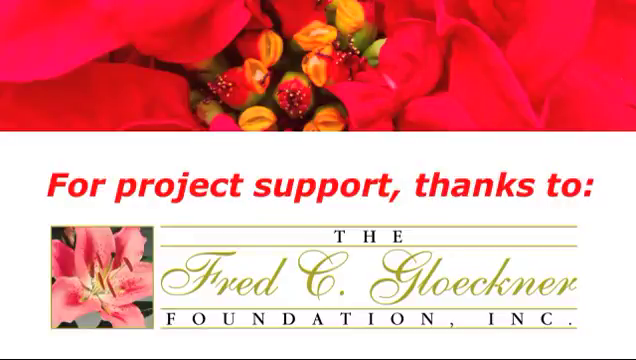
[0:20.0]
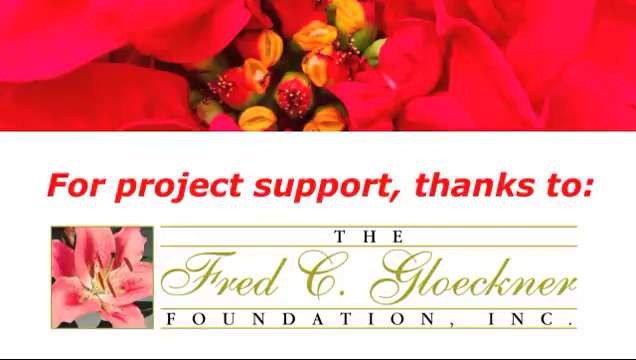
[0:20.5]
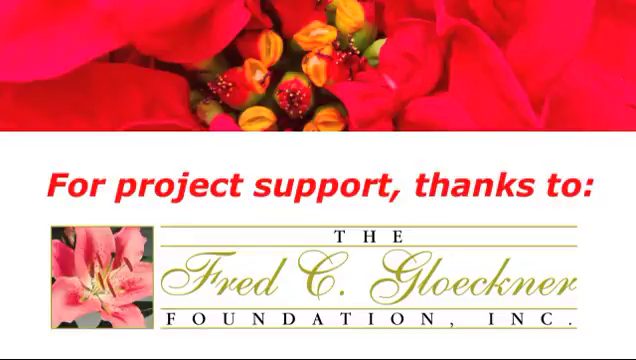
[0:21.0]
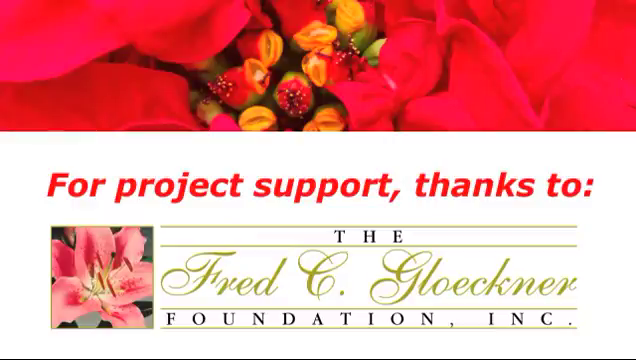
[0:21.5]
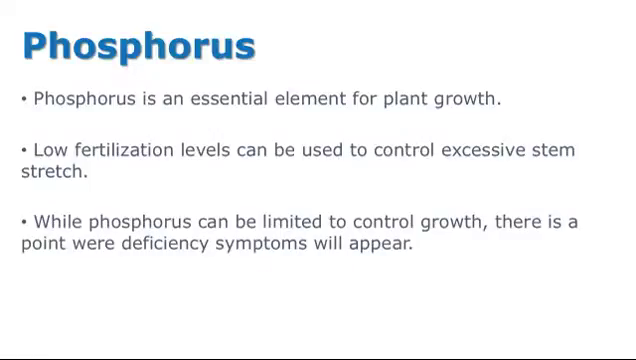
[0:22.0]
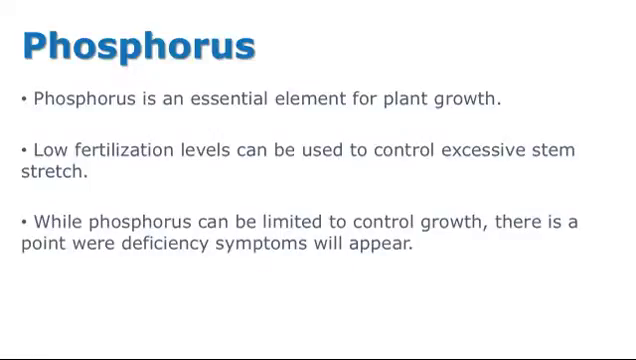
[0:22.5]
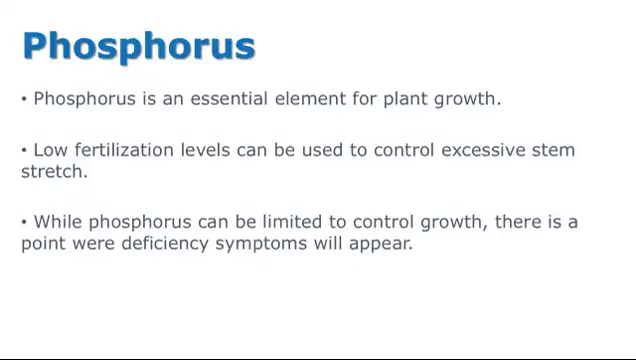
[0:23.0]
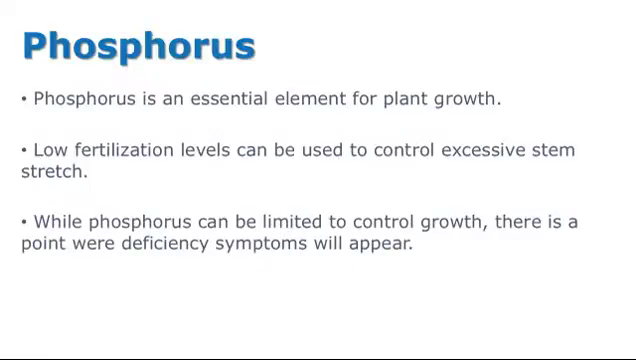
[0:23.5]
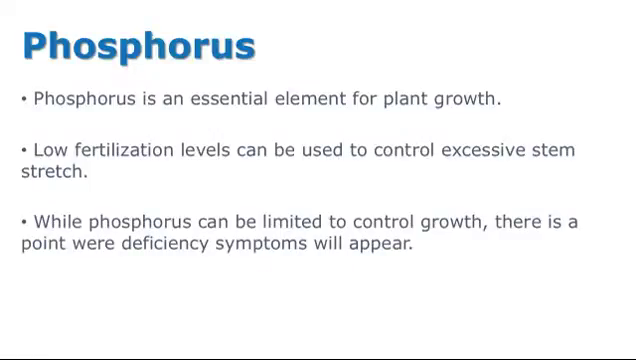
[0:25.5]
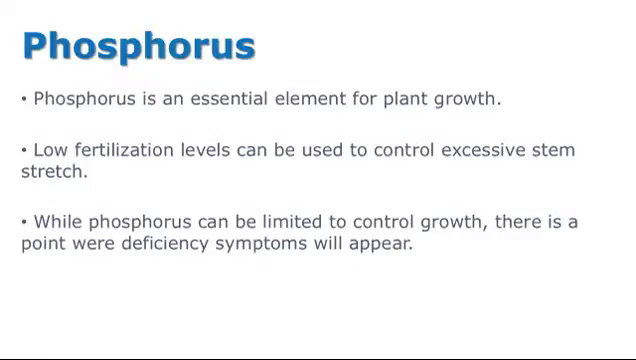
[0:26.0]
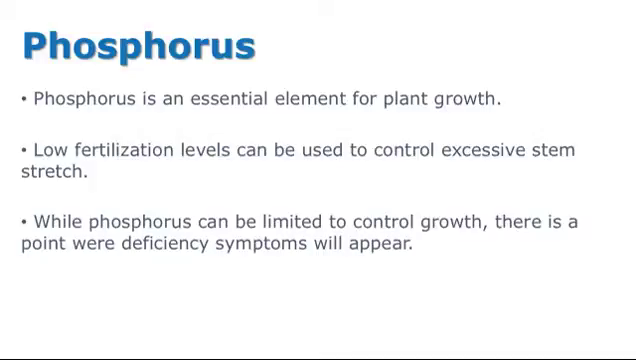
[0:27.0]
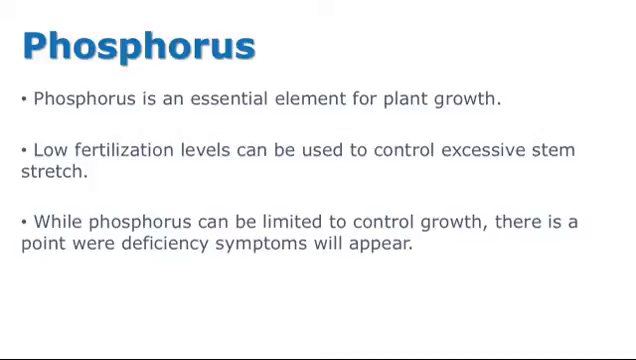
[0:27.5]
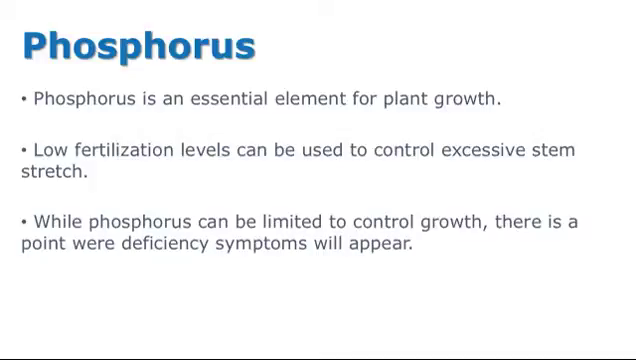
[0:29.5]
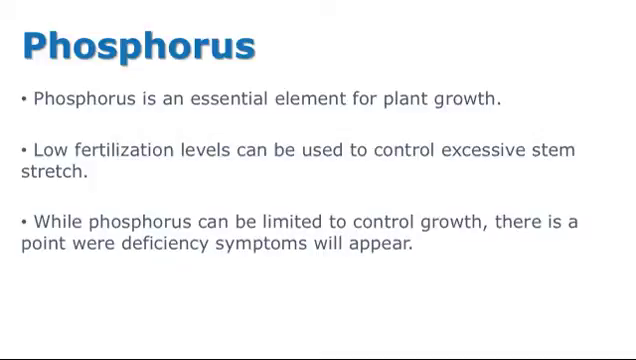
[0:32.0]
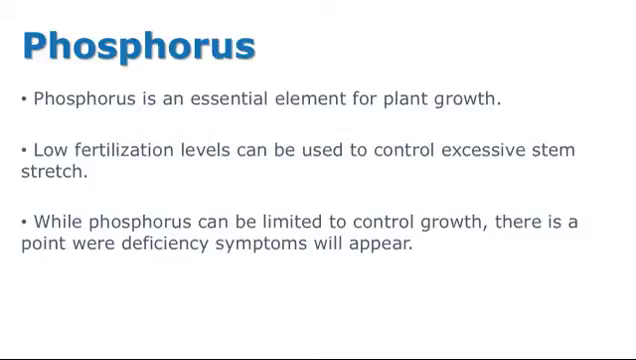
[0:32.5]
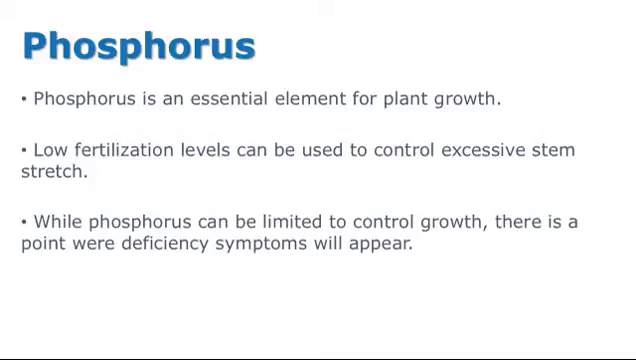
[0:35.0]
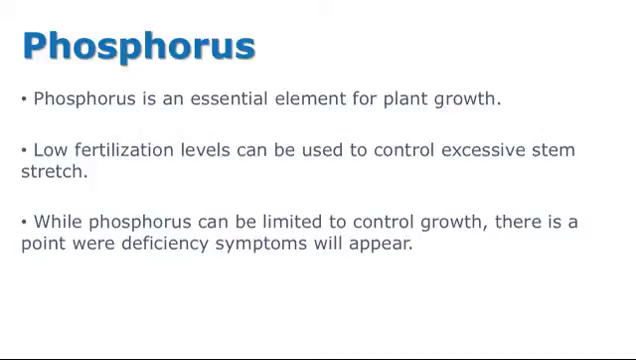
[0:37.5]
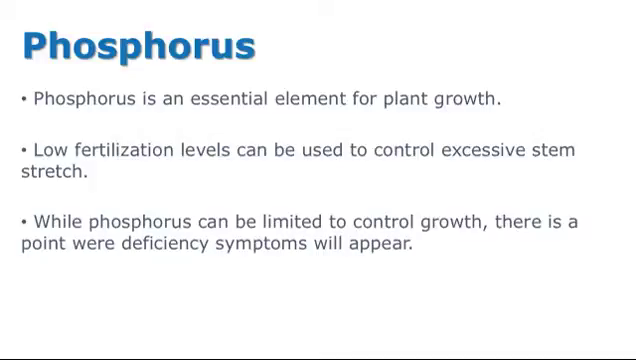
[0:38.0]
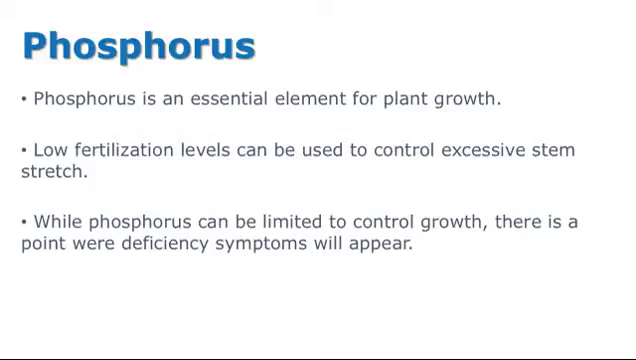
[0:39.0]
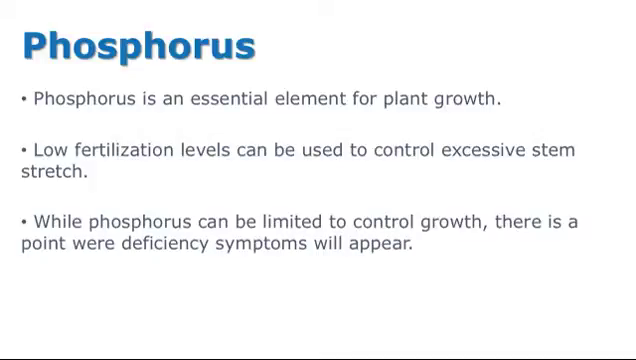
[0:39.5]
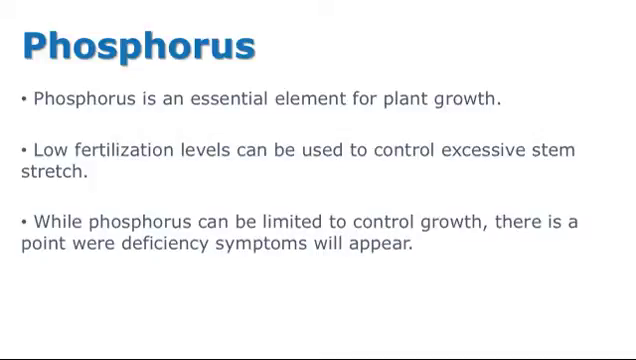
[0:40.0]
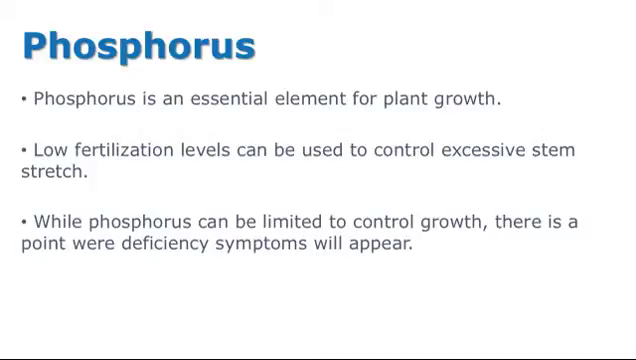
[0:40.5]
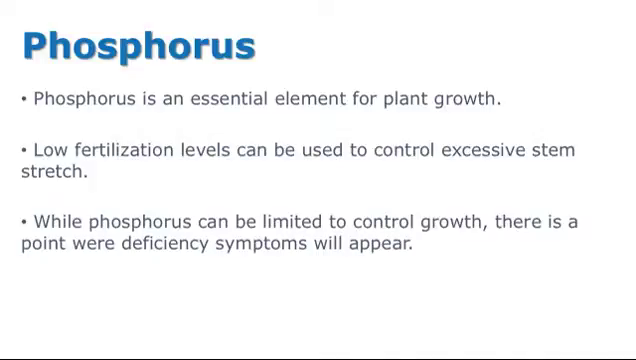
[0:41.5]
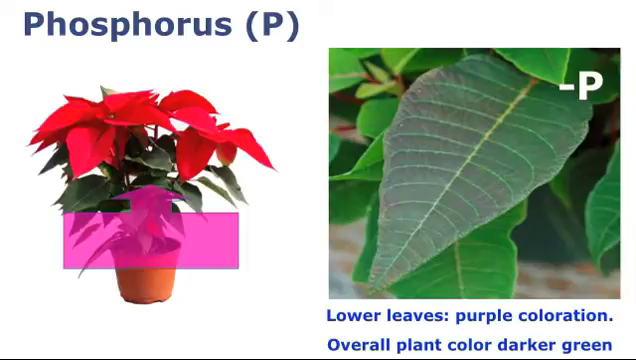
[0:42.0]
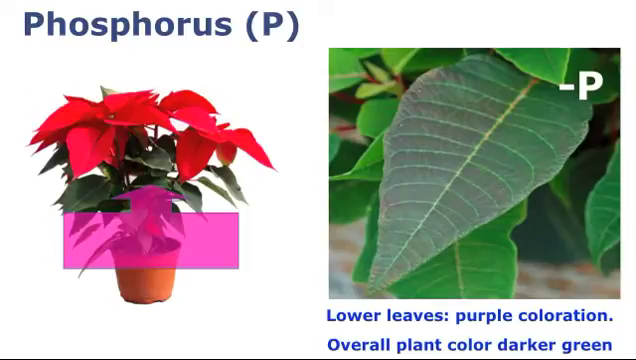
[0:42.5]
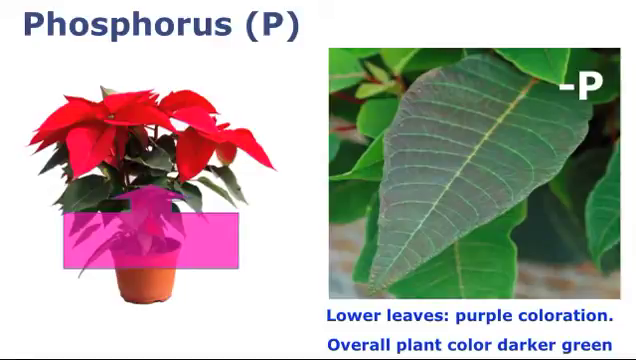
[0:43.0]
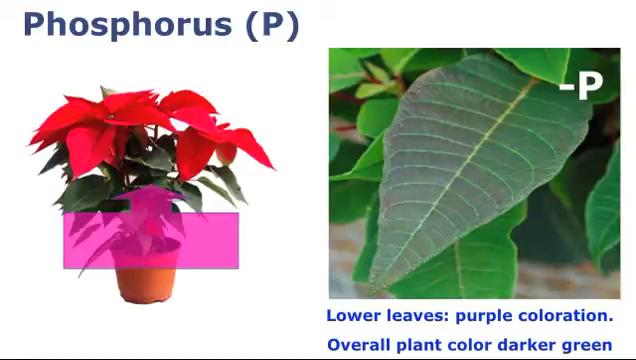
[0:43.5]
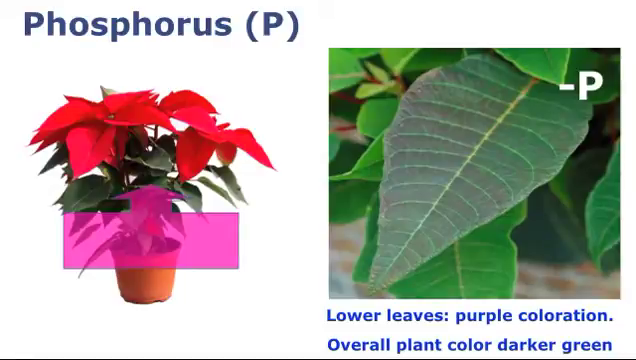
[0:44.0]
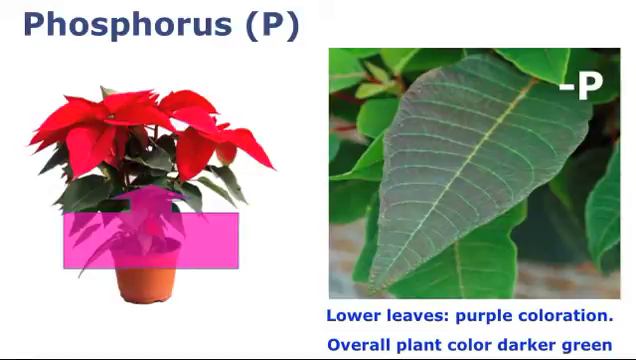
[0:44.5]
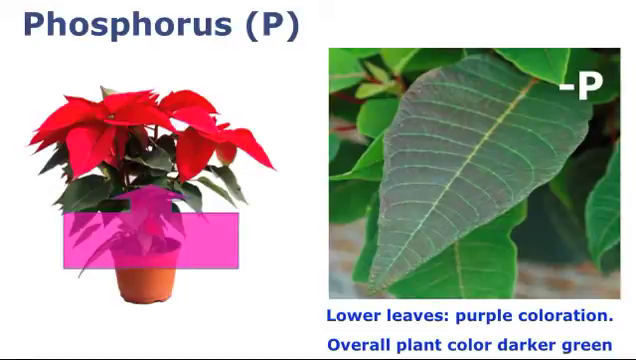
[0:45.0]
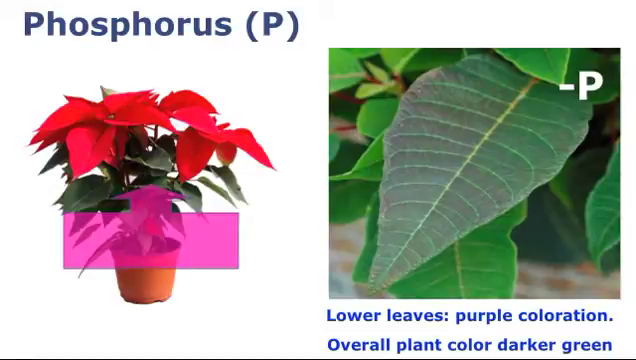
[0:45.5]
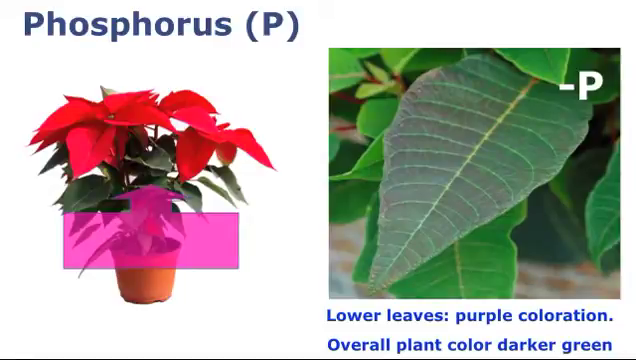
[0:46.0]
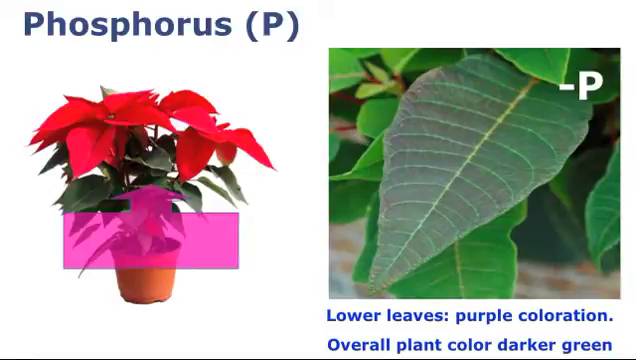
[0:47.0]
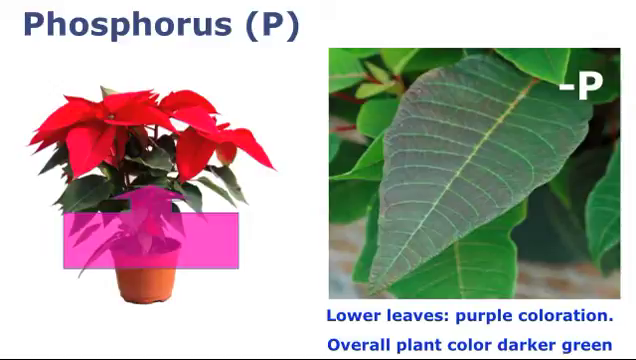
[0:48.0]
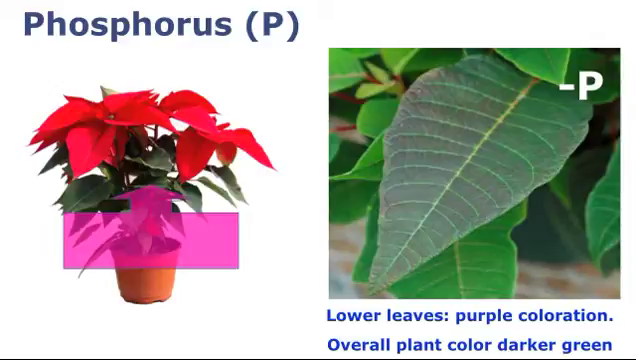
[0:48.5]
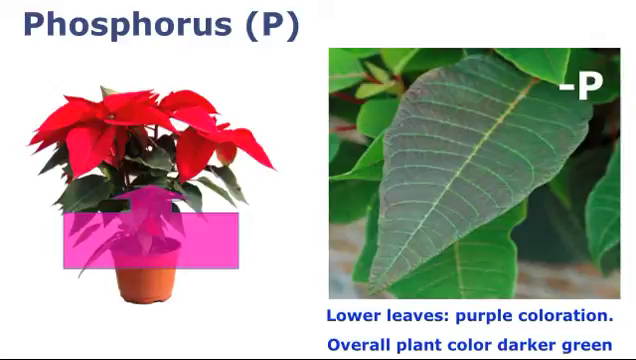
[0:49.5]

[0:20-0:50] An illustration of a poinsettia takes up about a third of the screen at the top. In the center, on a white background, red lettering reads "for project support thanks to," followed by a banner for the Fred C. Glockner Foundation Inc. The word "the" is in black lettering, "Fred C. Glockner" is in gold cursive lettering, and "Foundation Inc." at the bottom is in black lettering. On the left of the banner is a picture of a red poinsettia in a square, next to the foundation's logo. The scene transitions to a white background with bullet points and a banner at the top, where blue letters read "phosphorus." The first bullet point, in black lettering, reads "phosphorus is an essential element for plant growth." The second, also in black, reads "low fertilization levels can be used to control excessive stem stretch." The third, in black, reads "while phosphorus can be limited to control growth there is a point where deficiency symptoms will appear." Next comes another illustration, with blue lettering in the top left reading "phosphorus (P)." A poinsettia illustration is on the left, with a bright pink box and an arrow pointing upward from the bottom of the potted part of the poinsettia. On the right is a picture of a green leaf with "-P" in white lettering at its top right. In blue lettering at the bottom of the screen, below the leaf picture, it reads "lower leaves, purple coloration overall, plant color, darker green."